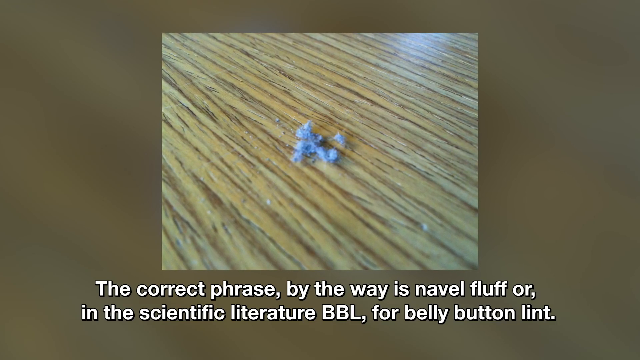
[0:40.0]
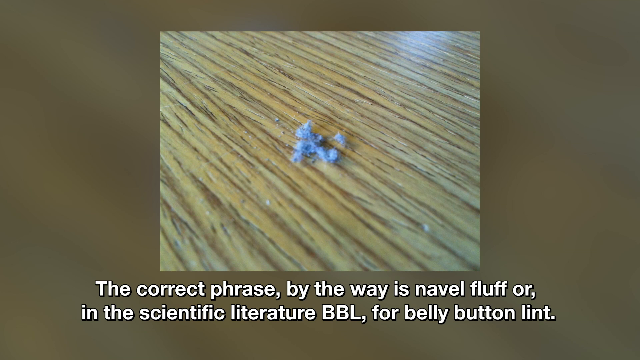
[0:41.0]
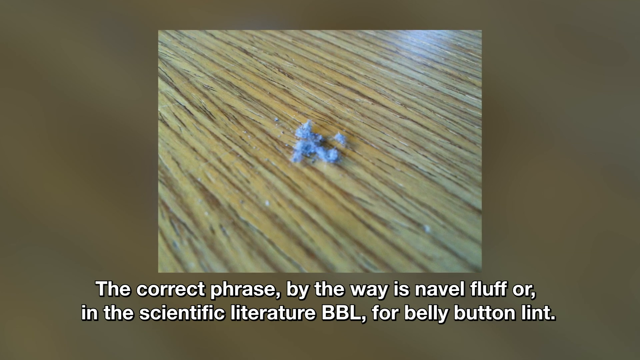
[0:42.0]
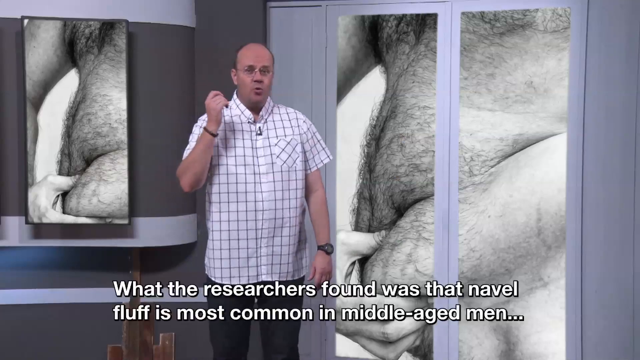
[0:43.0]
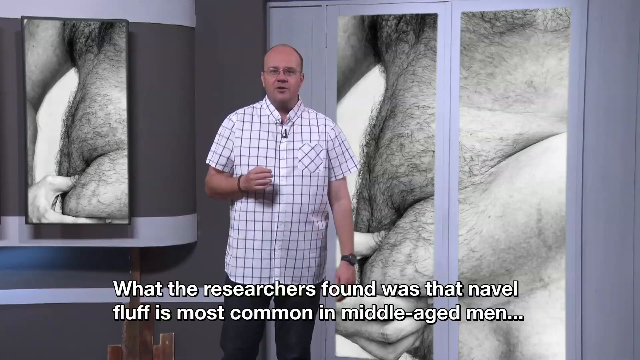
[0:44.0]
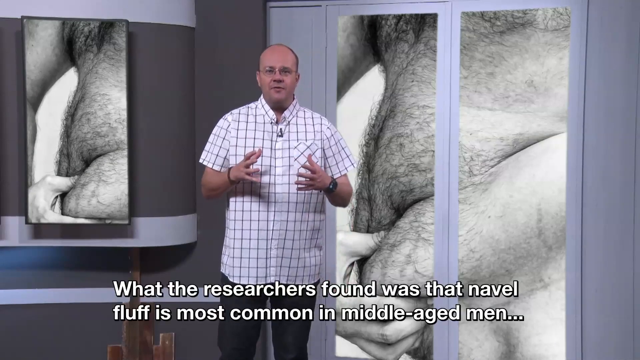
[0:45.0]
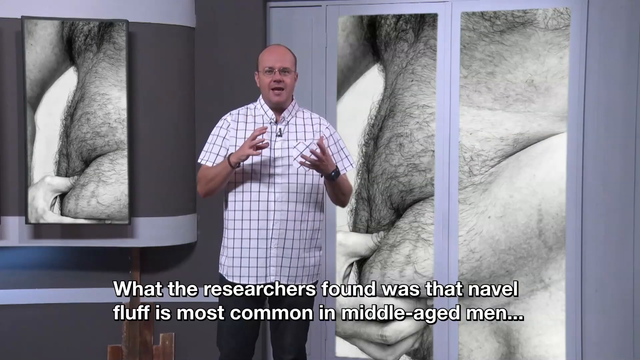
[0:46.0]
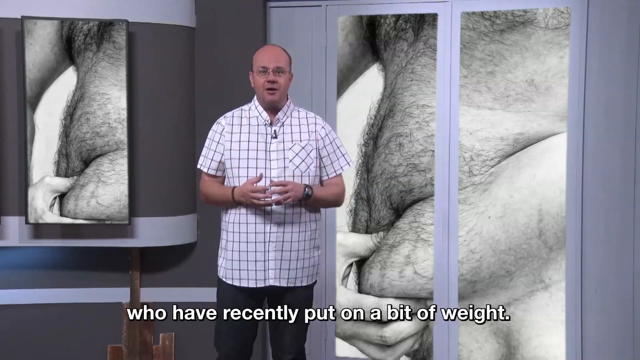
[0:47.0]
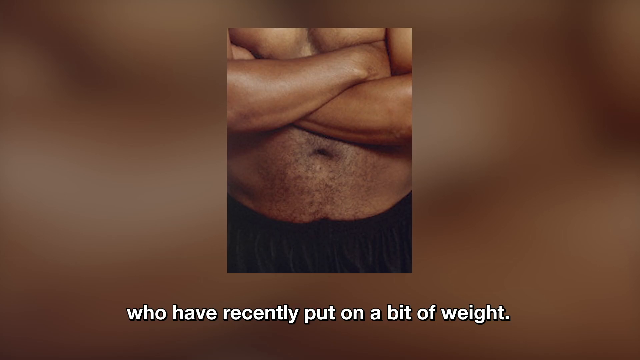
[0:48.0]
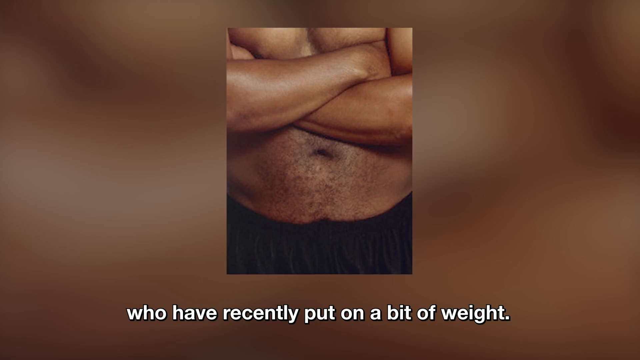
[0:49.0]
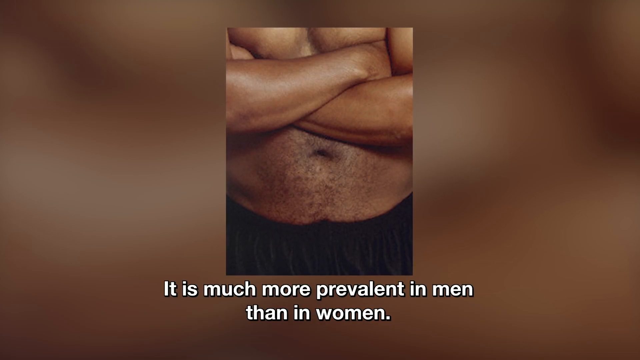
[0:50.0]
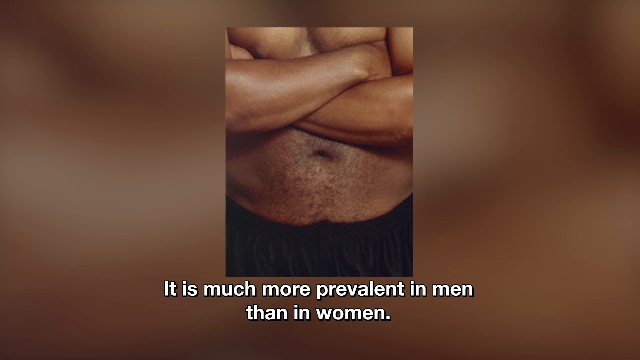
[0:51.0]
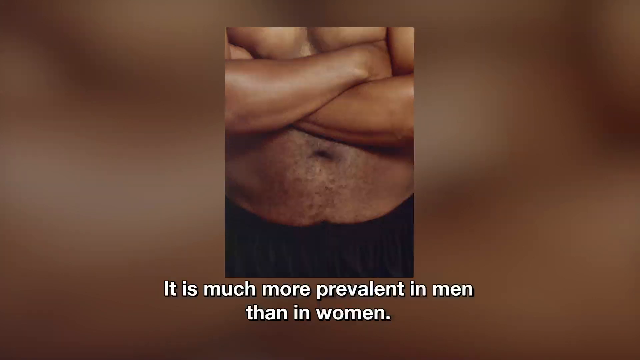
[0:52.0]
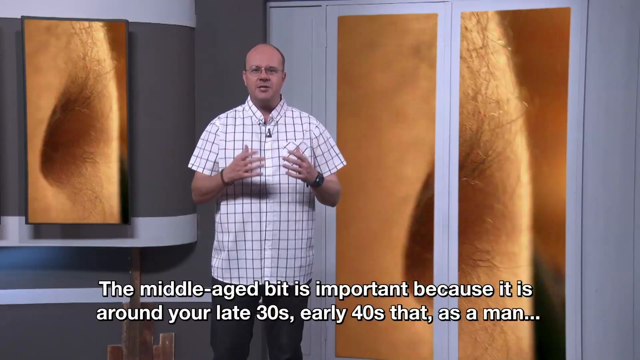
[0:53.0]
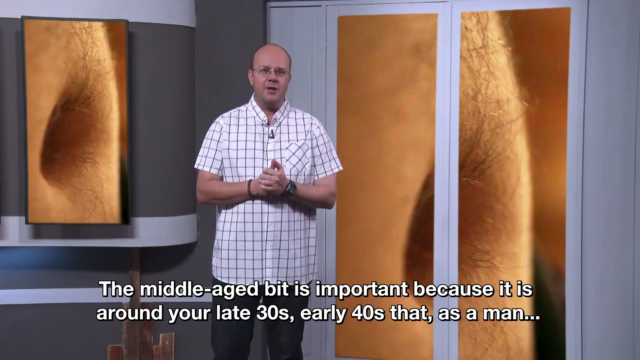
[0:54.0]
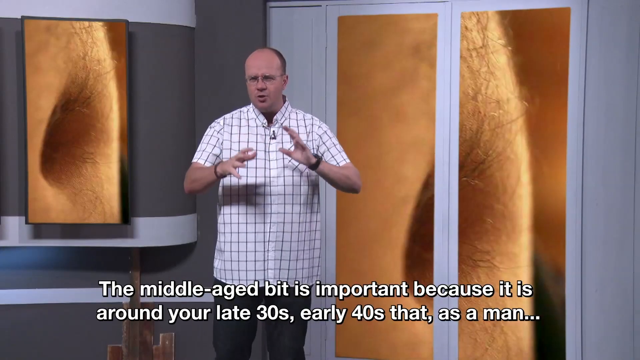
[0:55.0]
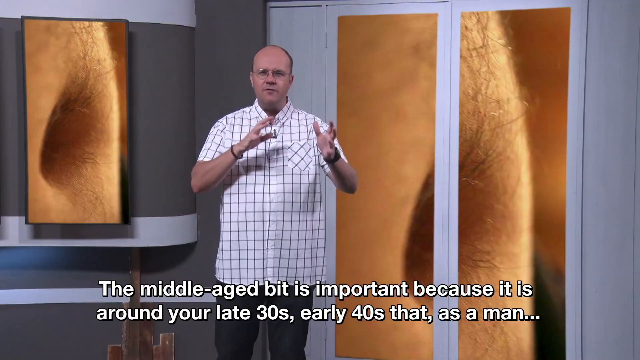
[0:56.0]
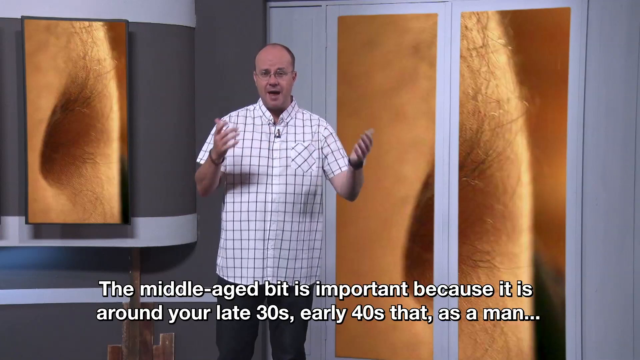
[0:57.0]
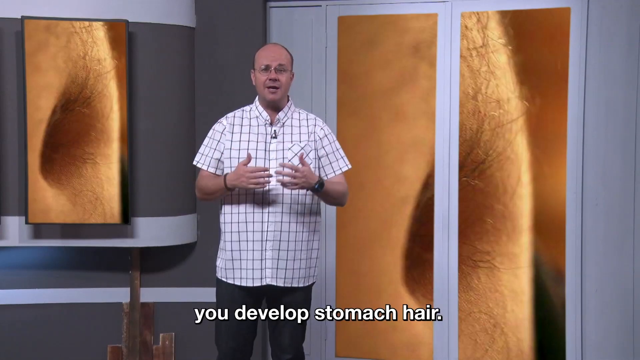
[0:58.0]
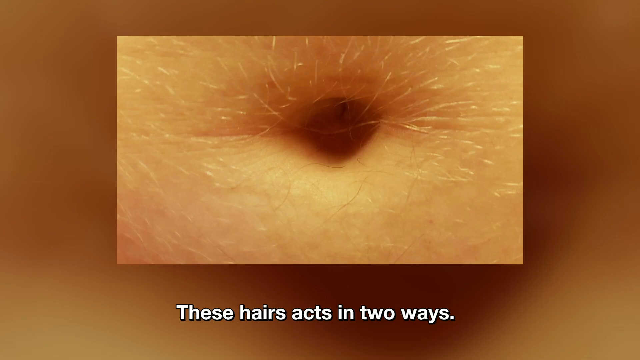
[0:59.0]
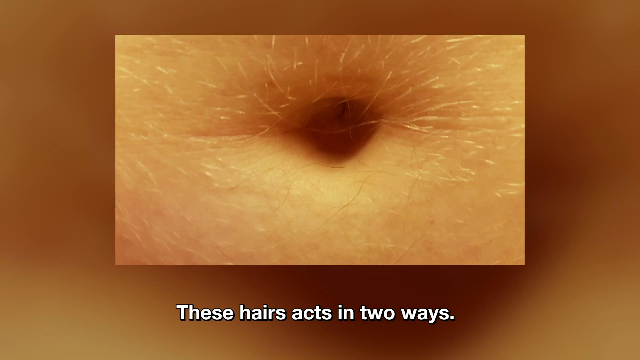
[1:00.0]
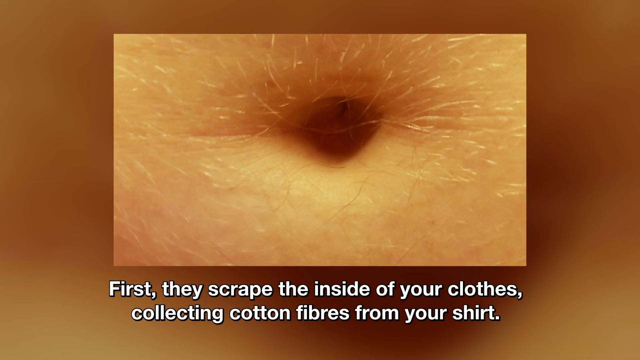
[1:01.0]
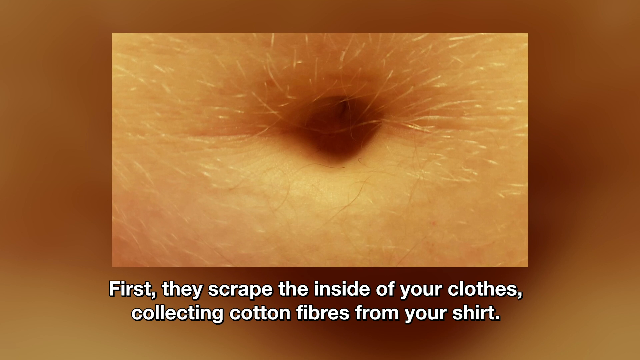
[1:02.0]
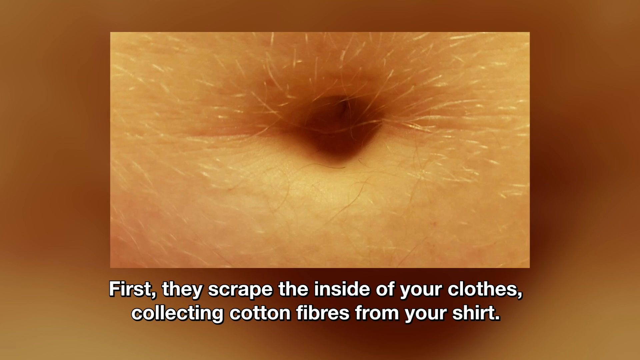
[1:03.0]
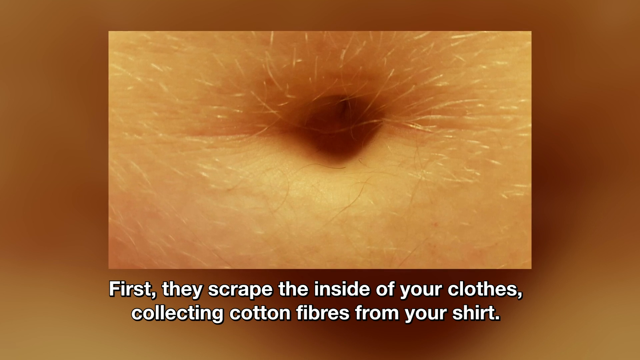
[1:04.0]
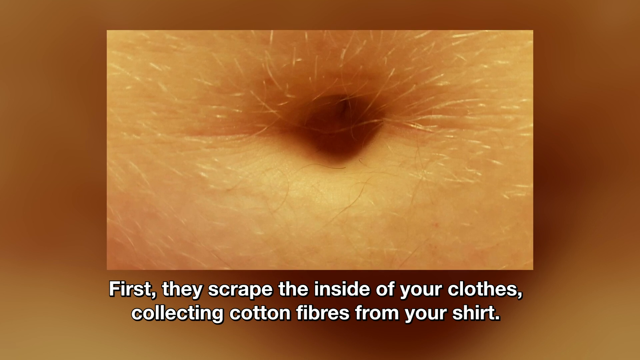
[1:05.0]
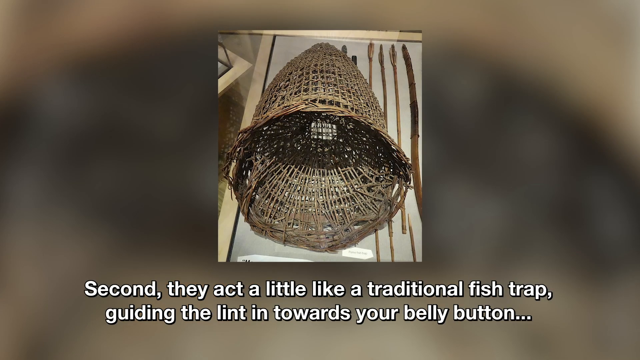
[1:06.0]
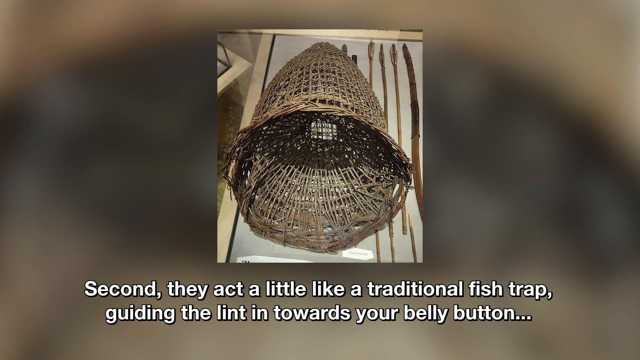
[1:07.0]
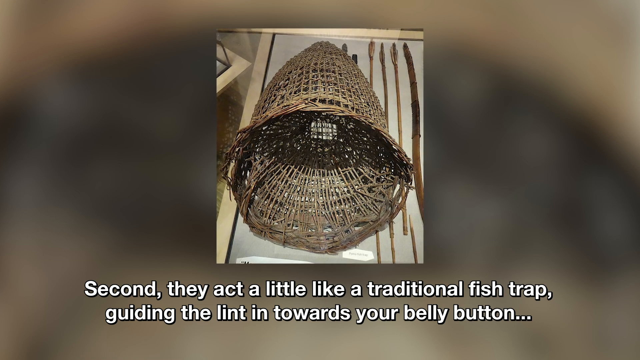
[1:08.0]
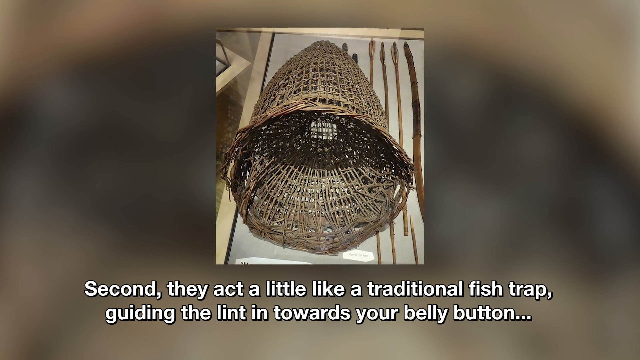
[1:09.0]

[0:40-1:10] A close-up shows somebody touching their belly button. A gentleman speaks to the camera and says, "what the researchers found was that navel fluff is most common in middle-aged men who have recently put on a little bit of weight," and a picture of a person with a pretty large stomach is shown. He continues: "The middle age bit is important because it's around your late 30s and early 40s as a man, that you develop stomach hair. The hair acts in two ways. First, they scrape the inside of your clothes, collecting cotton fibers from your shirt. Second, they act like the traditional fish trap guiding the lint towards your belly button."